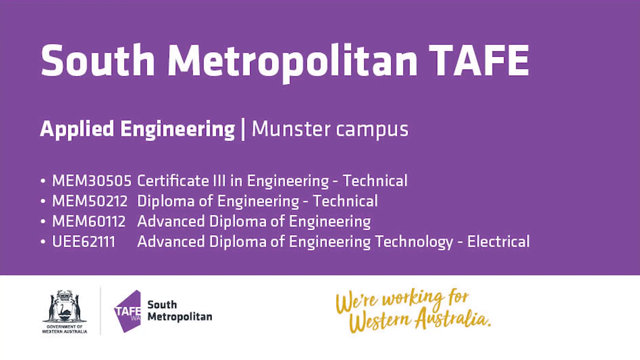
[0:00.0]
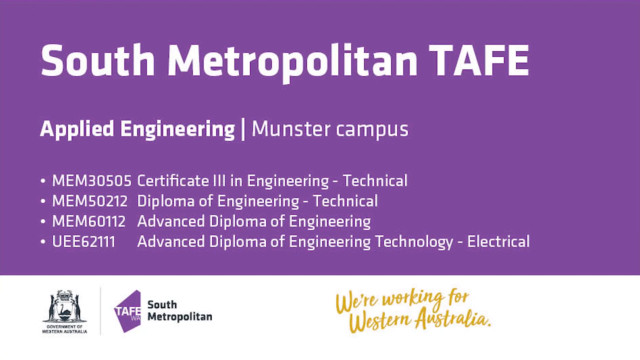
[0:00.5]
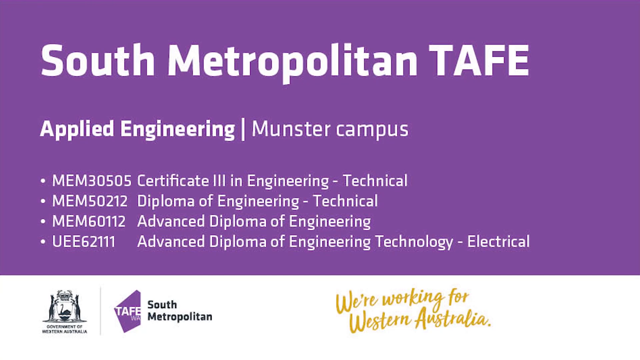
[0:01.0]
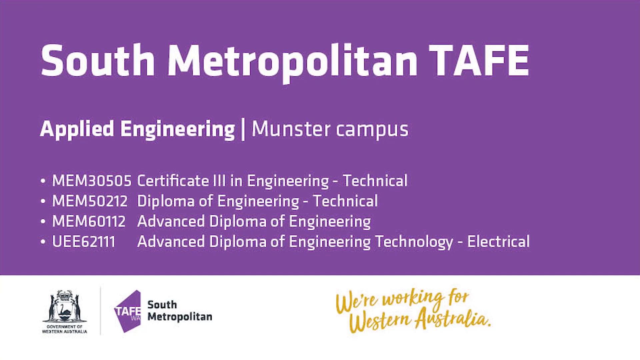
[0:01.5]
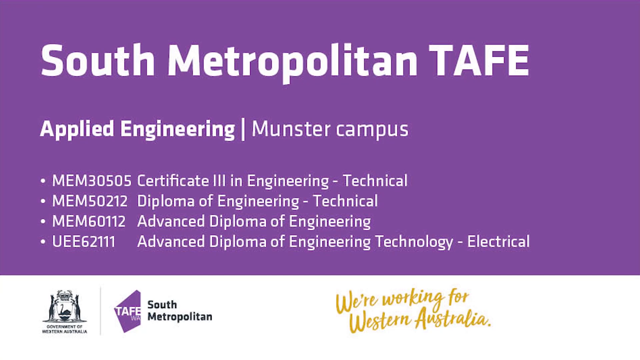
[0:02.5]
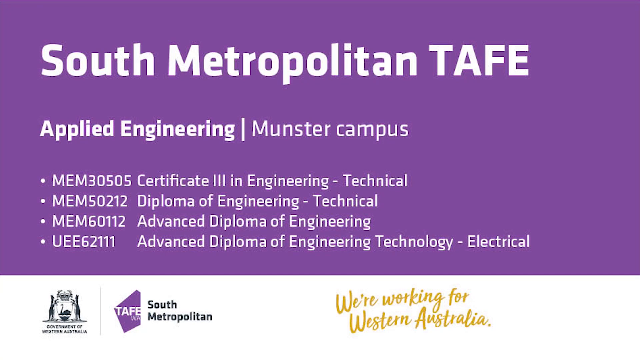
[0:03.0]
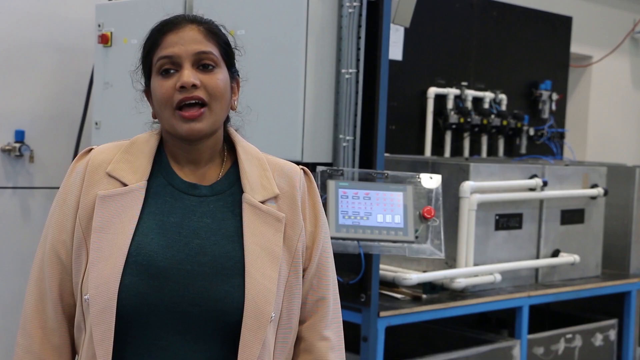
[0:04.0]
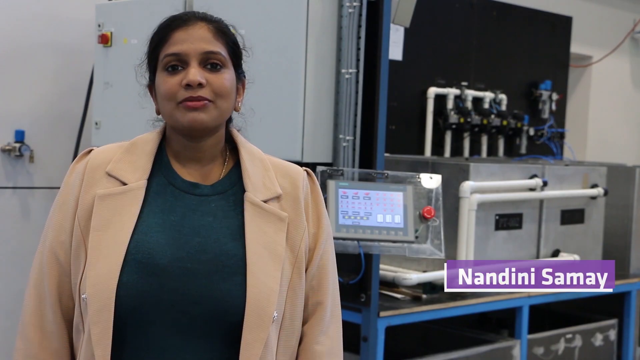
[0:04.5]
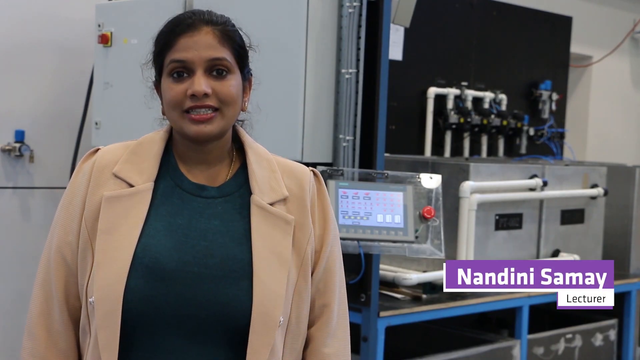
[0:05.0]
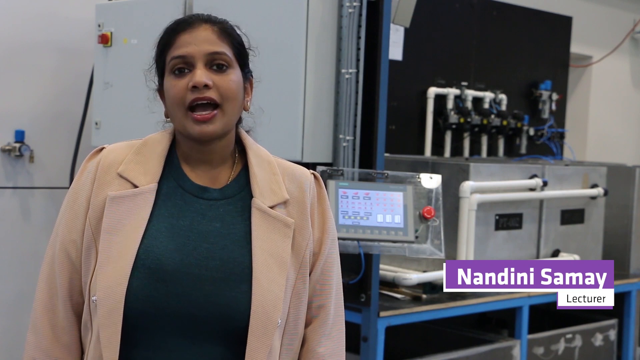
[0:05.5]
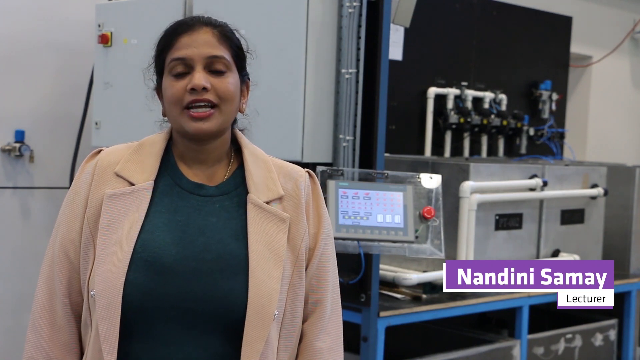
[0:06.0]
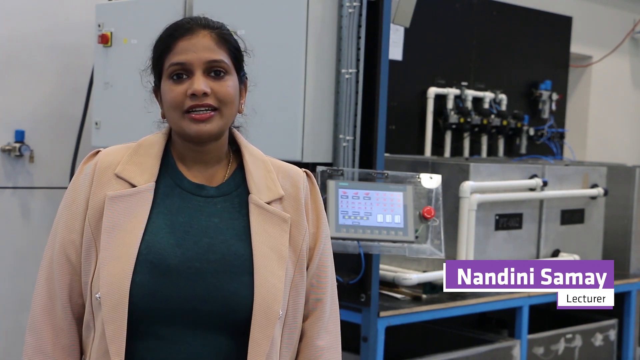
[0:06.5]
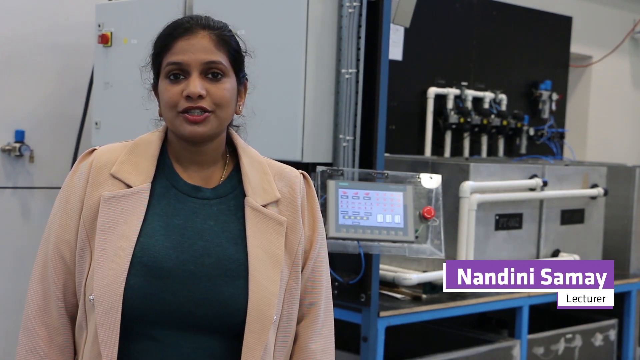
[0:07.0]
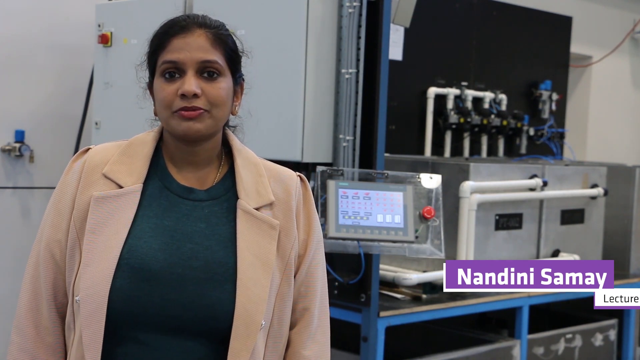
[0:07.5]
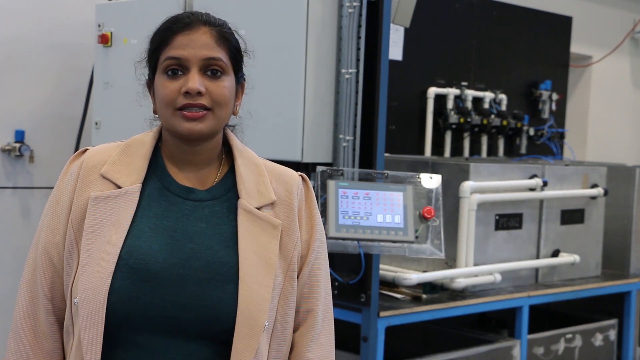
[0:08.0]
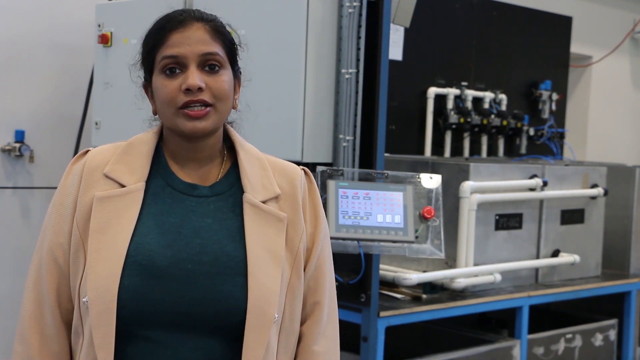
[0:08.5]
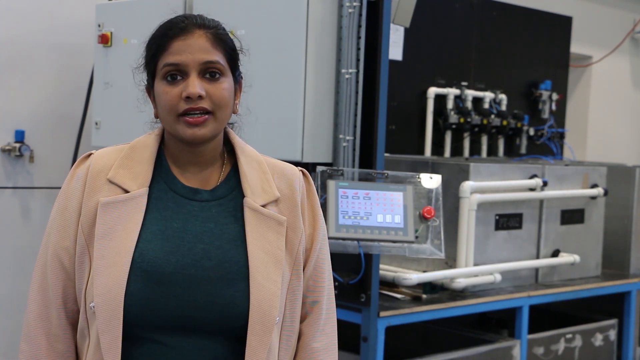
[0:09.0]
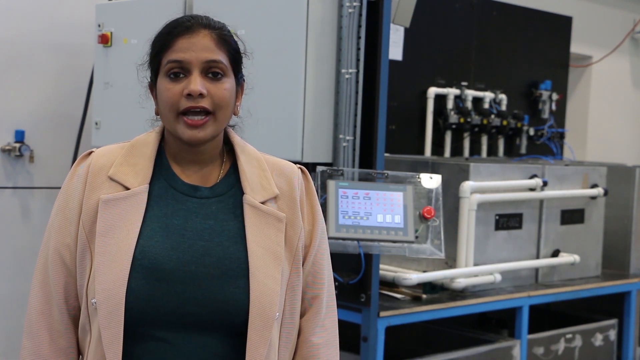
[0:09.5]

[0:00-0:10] The video begins with a purple screen that reads "South Metropolitan TAFE Applied Engineering Munster campus." It lists four technical, engineering and electrical qualifications: "Certificate 3 in engineering technical diploma of engineering technical advanced diploma of engineering and advanced diploma of engineering technology electrical." Next comes a woman named Nandini Samai, a lecturer, who is Arab. She wears a green sweater with a tan jacket over it and stands next to a bunch of equipment. She has long, dark hair that is pulled back and a little messy, dark eyes, lipstick and eyeliner, and she is a little chunky. Text reads "we're working for Western Australia." There is also a symbol that is not legible.